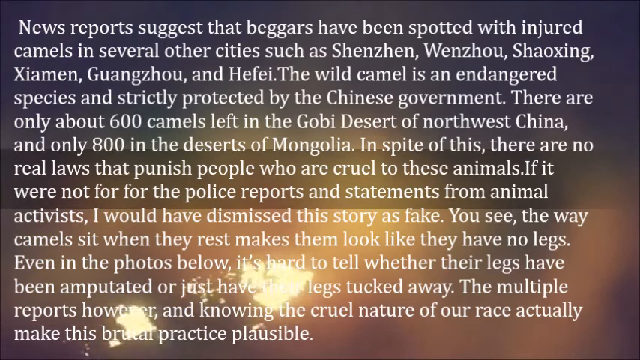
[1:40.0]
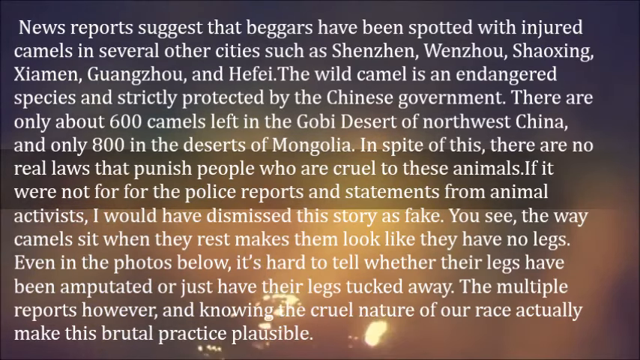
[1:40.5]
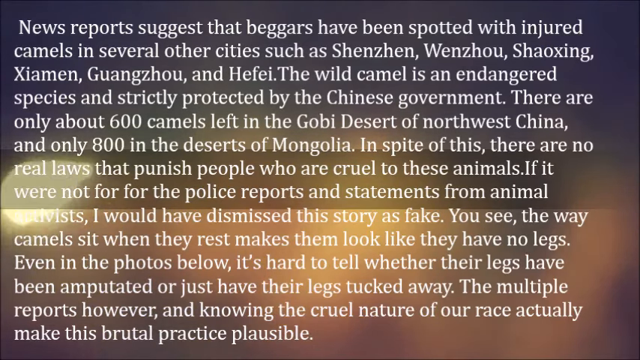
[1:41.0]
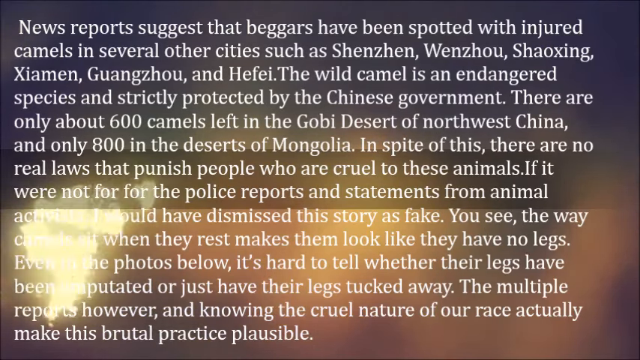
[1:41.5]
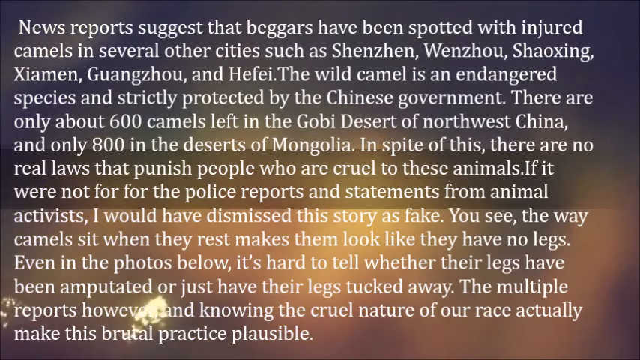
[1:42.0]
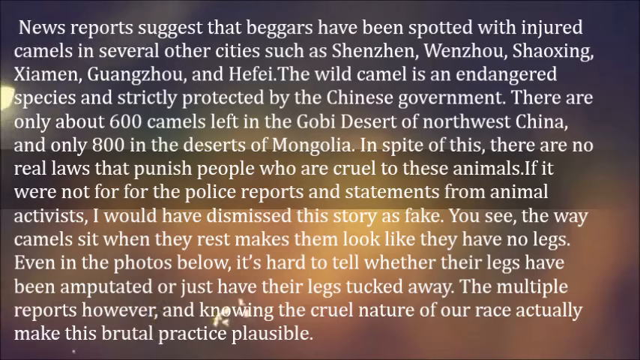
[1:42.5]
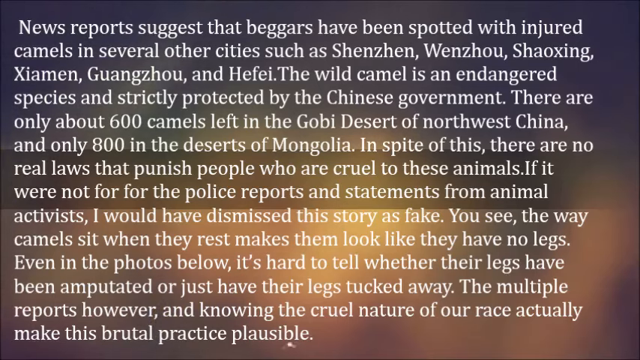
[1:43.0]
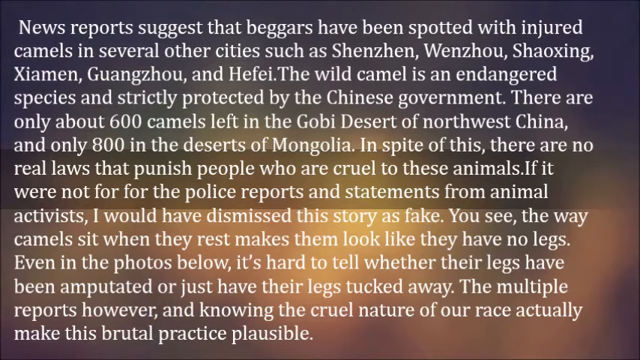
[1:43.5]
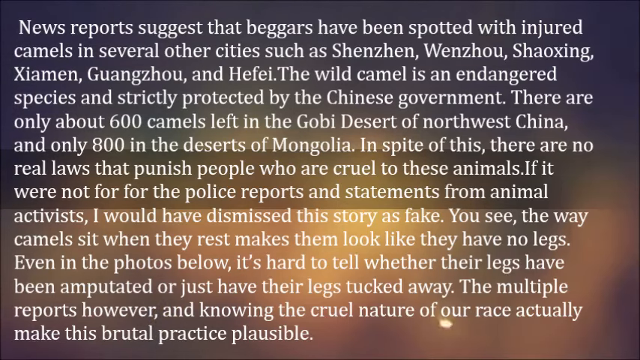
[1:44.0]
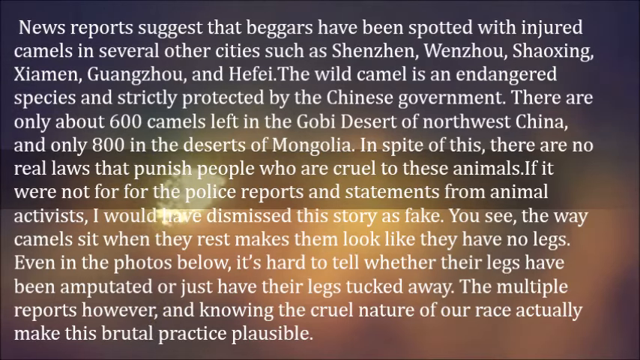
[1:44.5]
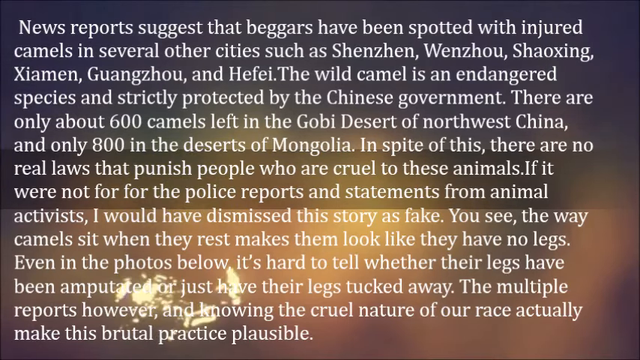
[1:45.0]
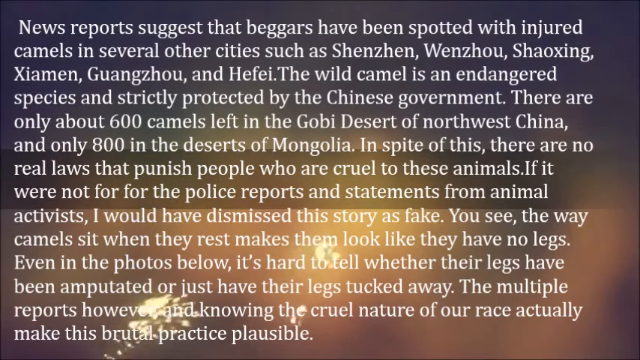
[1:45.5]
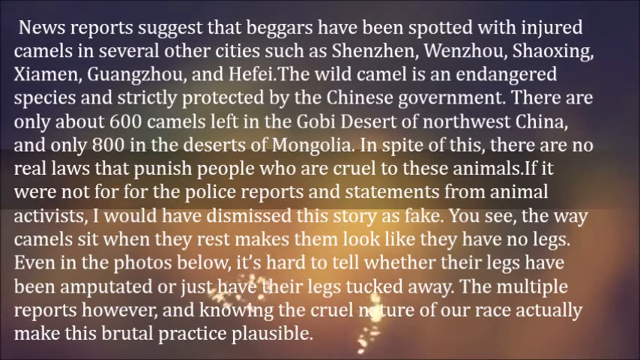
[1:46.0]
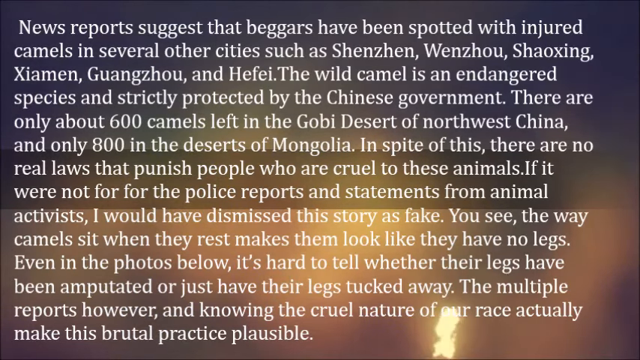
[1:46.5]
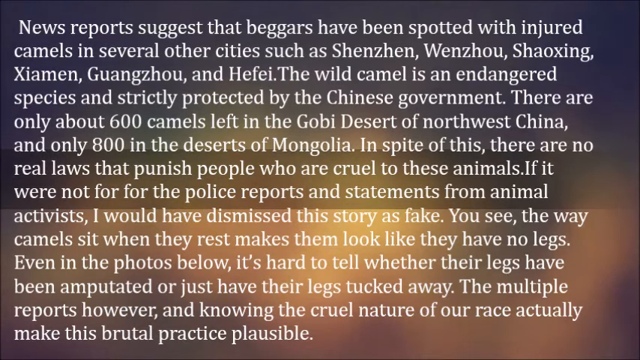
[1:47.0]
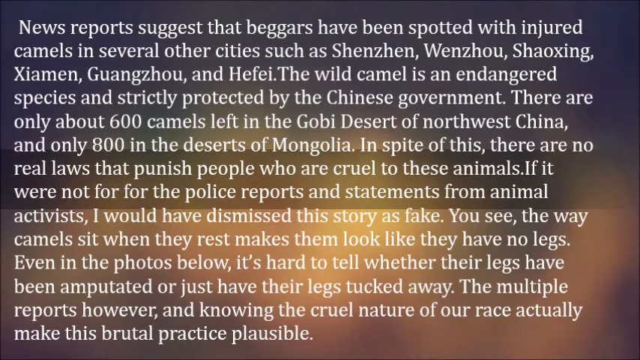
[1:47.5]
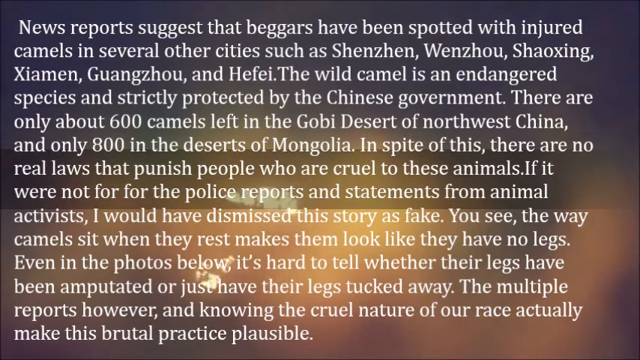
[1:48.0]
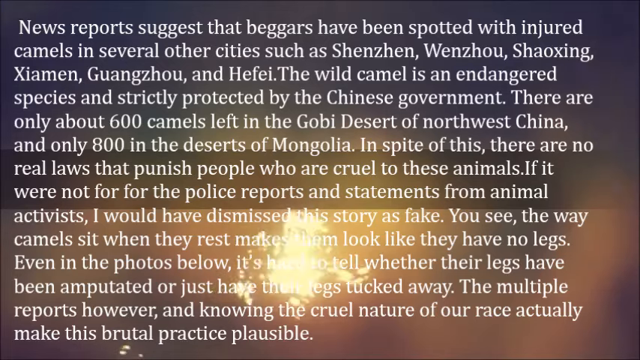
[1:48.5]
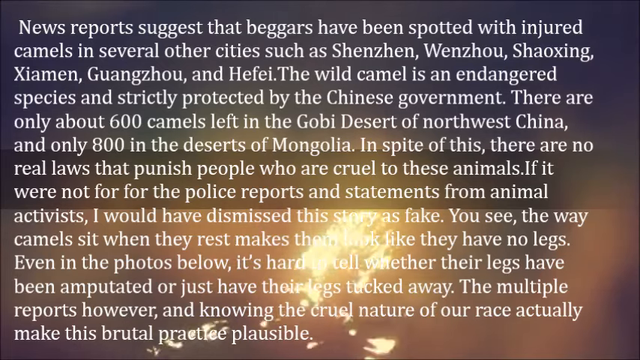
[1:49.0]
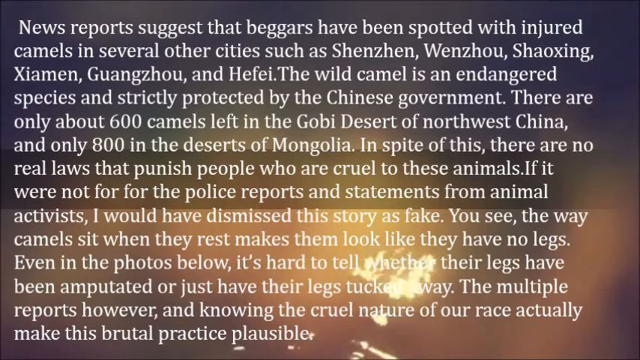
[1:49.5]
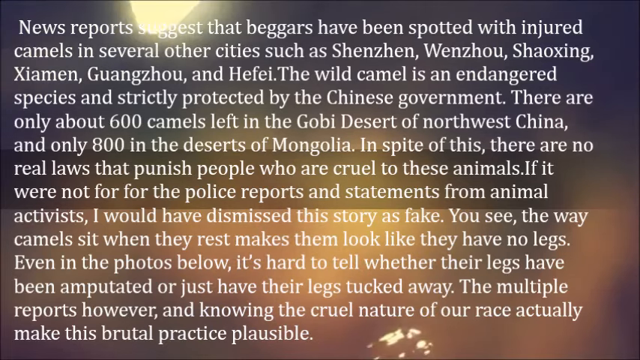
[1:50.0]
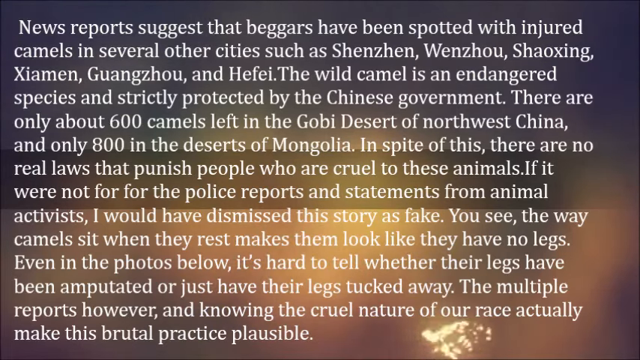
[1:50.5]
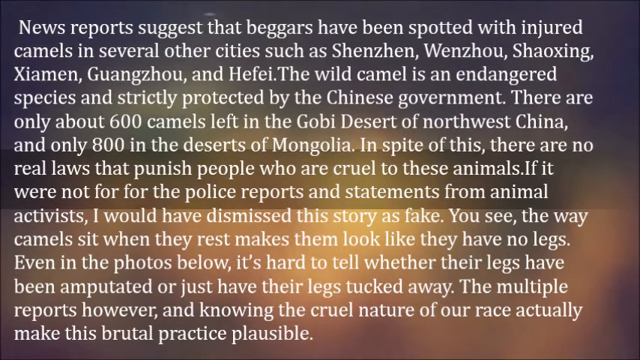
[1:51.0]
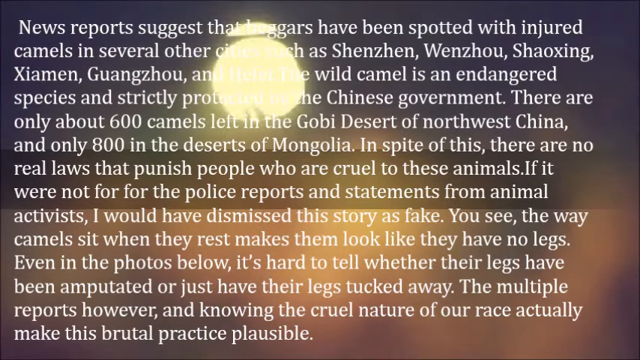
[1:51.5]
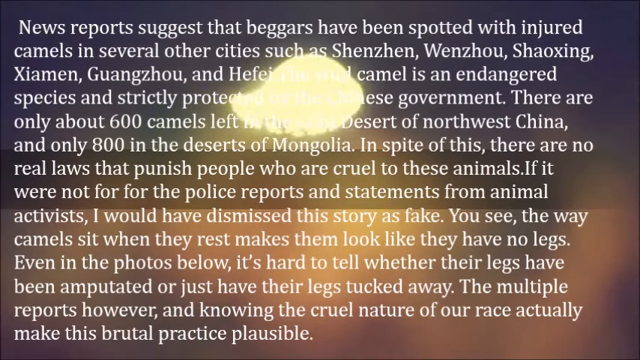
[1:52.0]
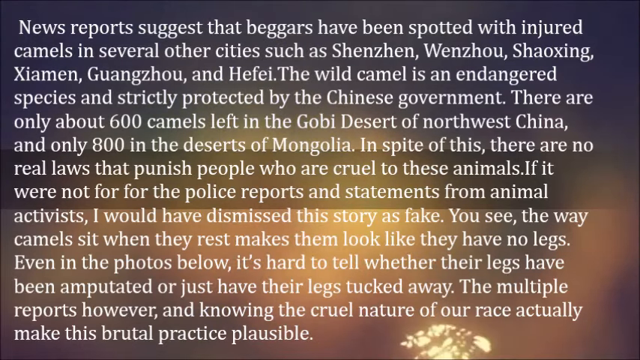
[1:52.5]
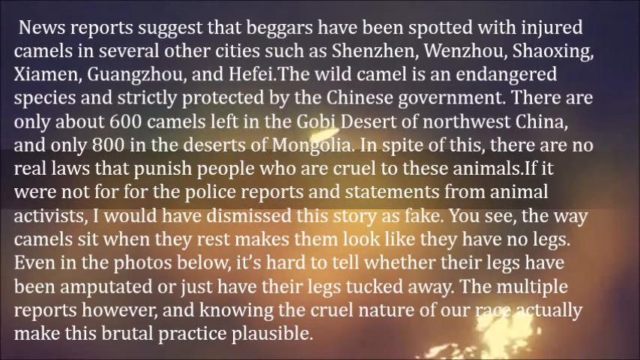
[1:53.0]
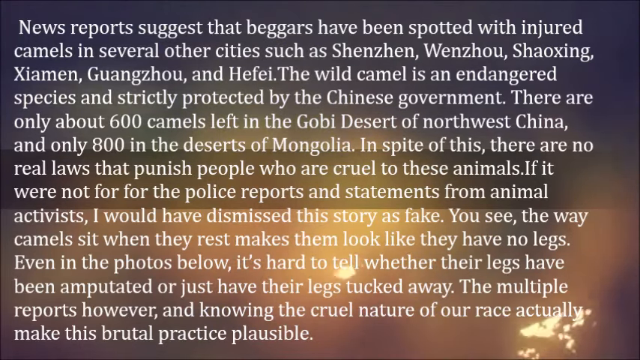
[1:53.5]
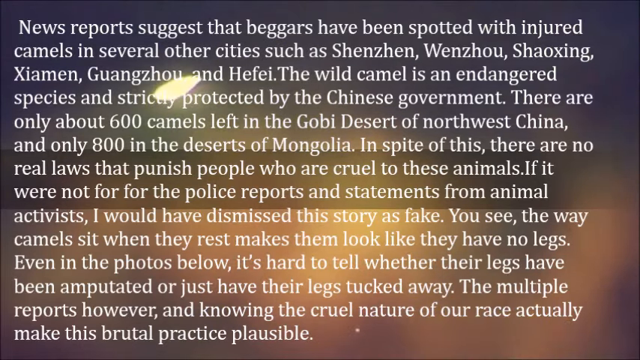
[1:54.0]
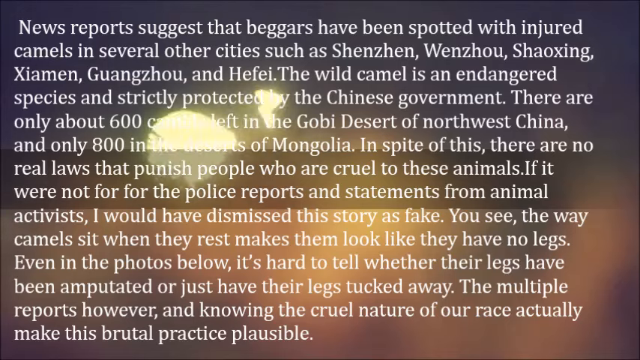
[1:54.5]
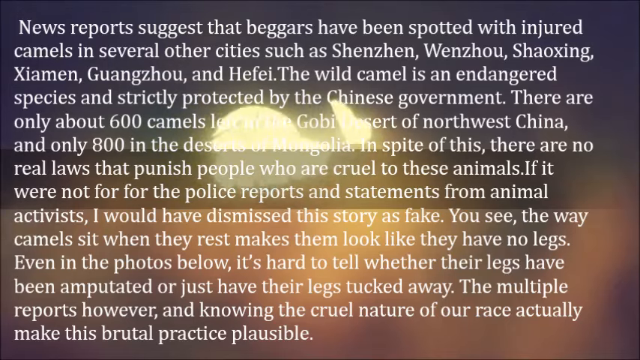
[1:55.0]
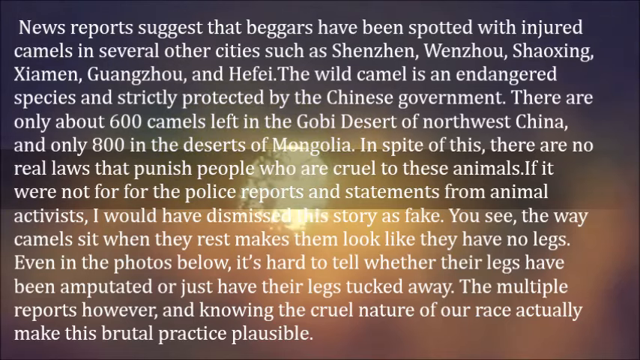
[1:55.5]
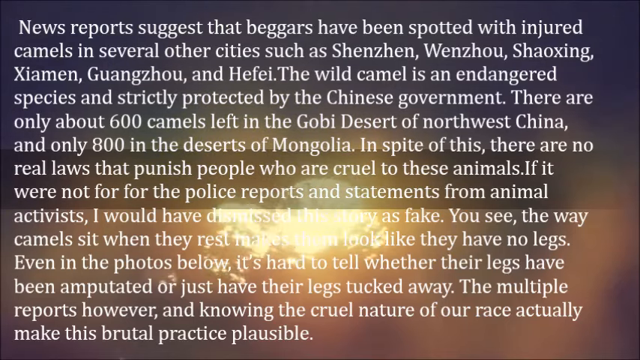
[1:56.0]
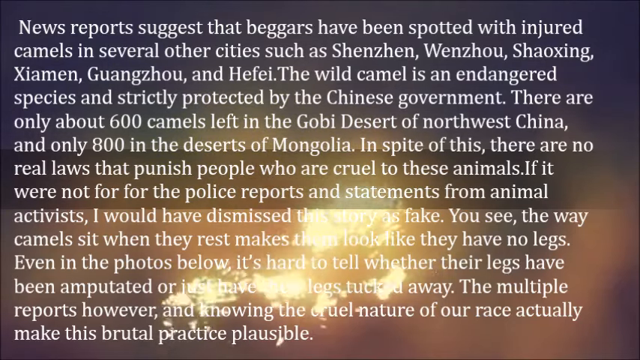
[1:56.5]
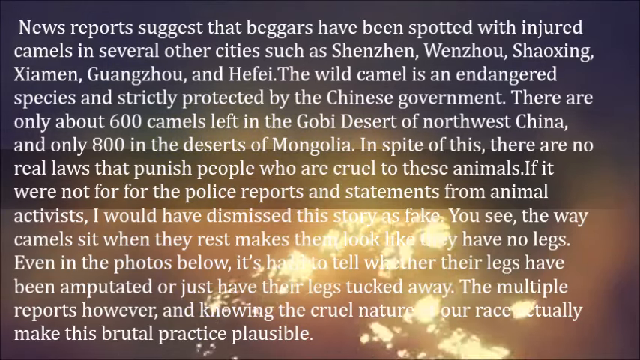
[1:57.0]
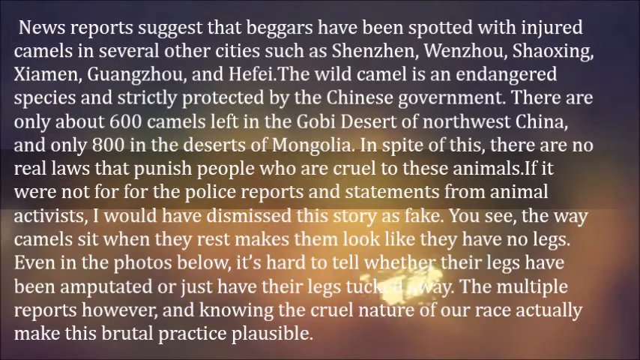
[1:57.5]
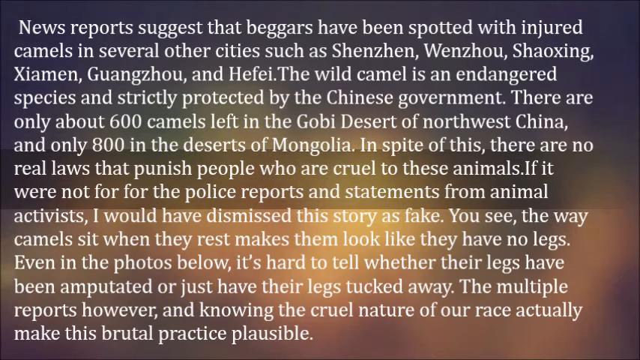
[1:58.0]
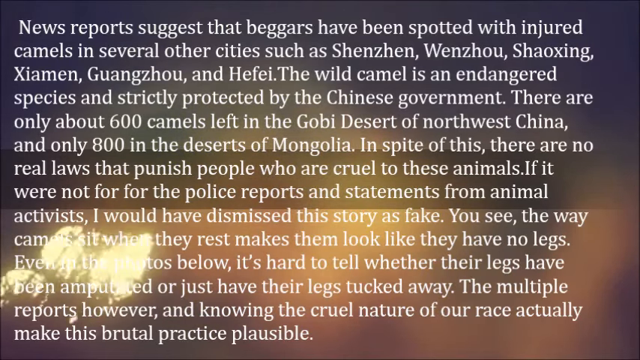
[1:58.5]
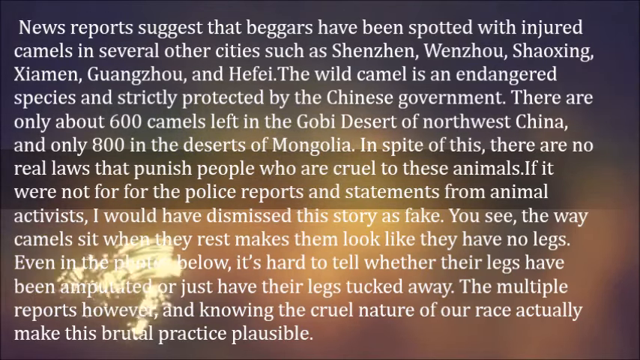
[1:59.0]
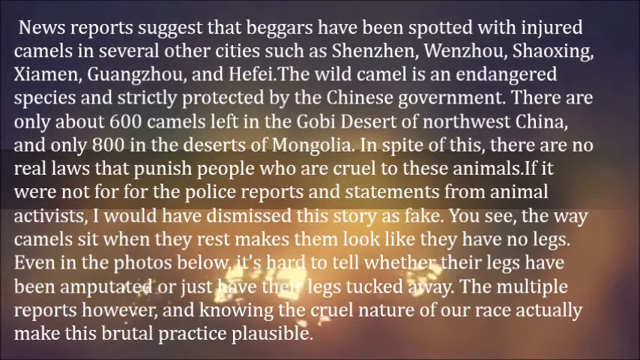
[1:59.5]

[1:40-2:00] The very text-dense paragraph remains on the screen for the entire segment, questioning whether the stories of Chinese beggars mutilating camels are true. It says there are very few camels left in China, only about 600 in and around the Gobi Desert in northwest China and only about 800 in the deserts of Mongolia, and debates whether the camels were actually mutilated or just had their legs tucked under them. The backdrop is various shades of brown, gray and black, and in the distance what appears to be water rolls across the screen, with gold and yellow shimmers moving diagonally from left to right. The paragraph is one large, long block in white font.